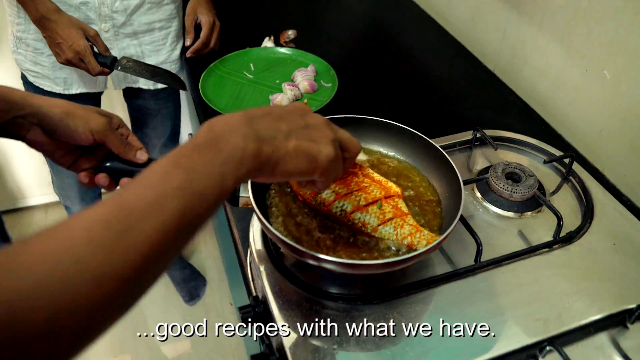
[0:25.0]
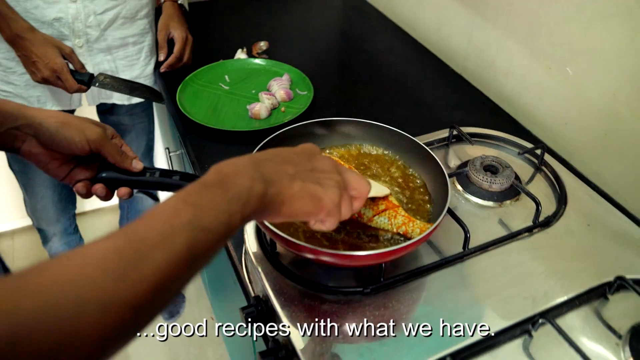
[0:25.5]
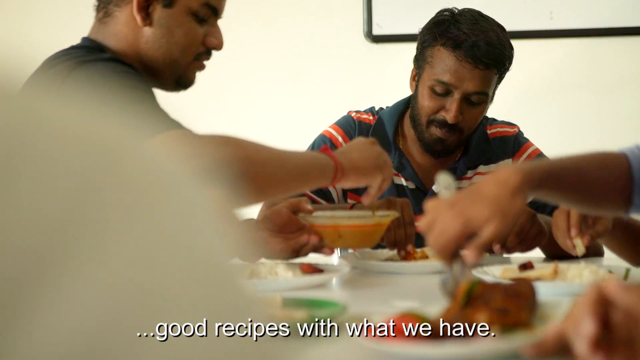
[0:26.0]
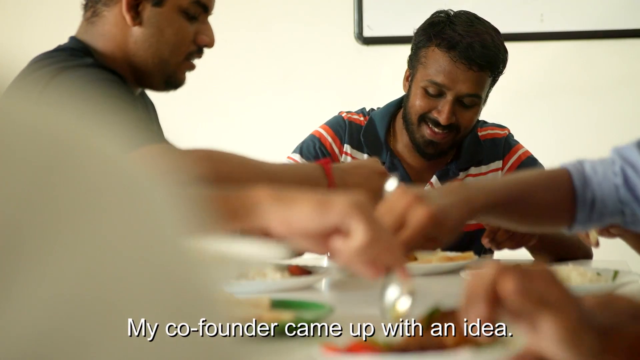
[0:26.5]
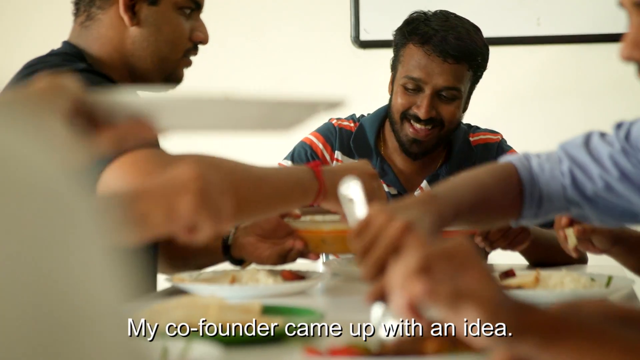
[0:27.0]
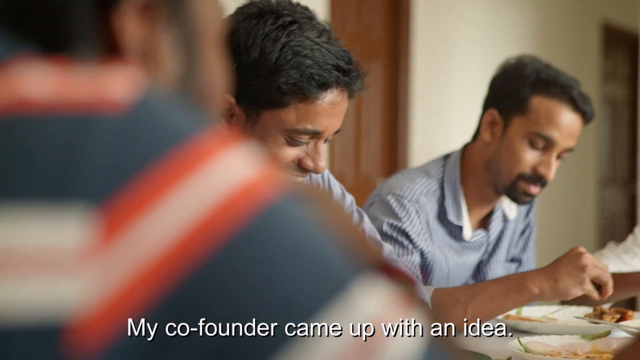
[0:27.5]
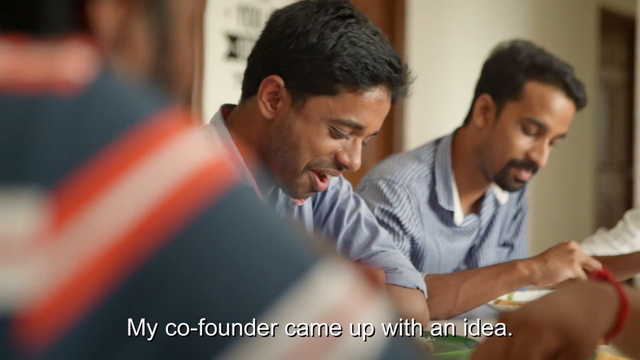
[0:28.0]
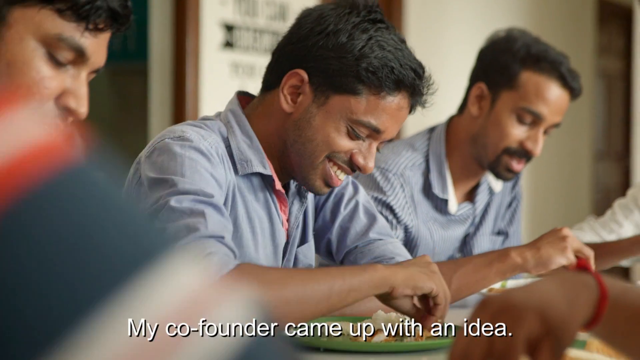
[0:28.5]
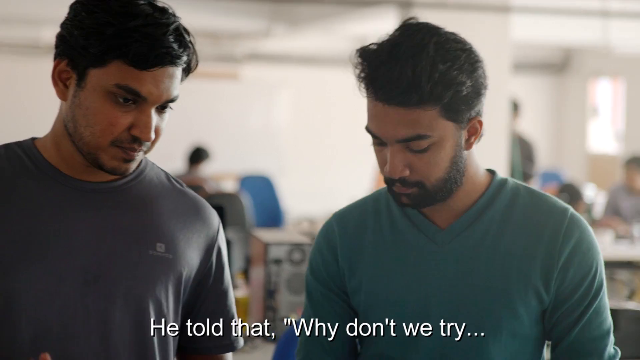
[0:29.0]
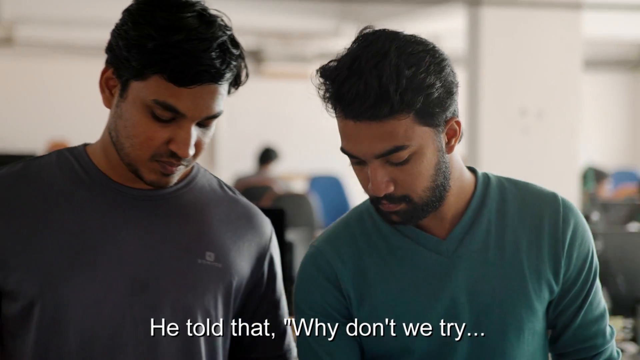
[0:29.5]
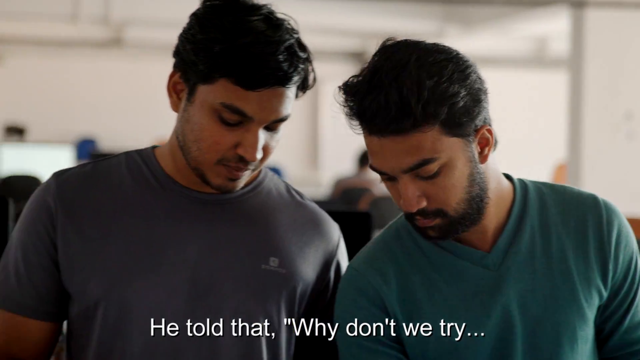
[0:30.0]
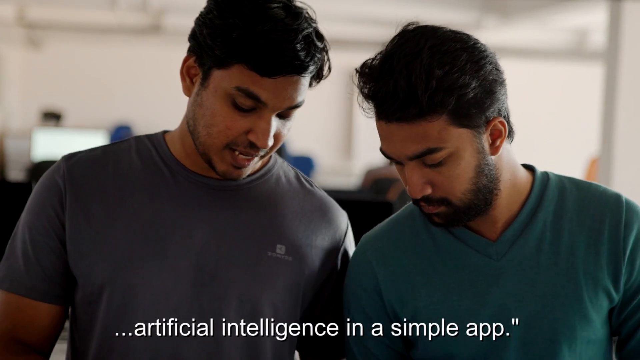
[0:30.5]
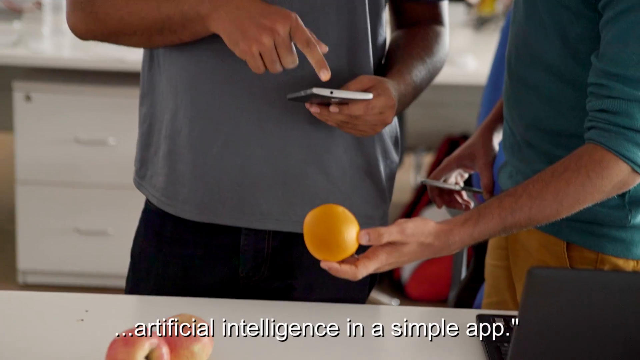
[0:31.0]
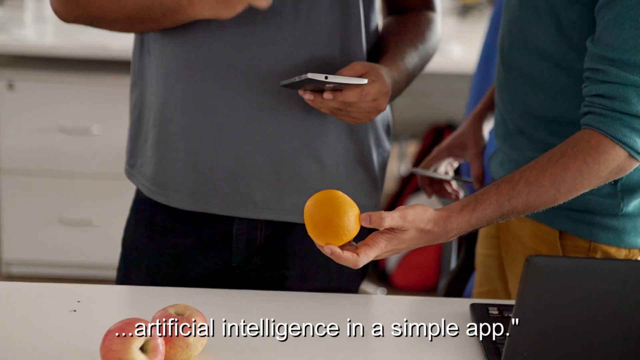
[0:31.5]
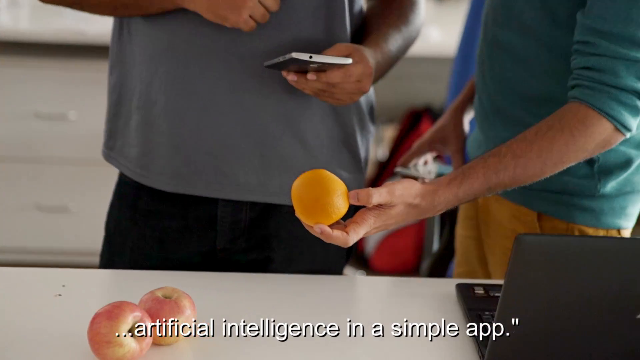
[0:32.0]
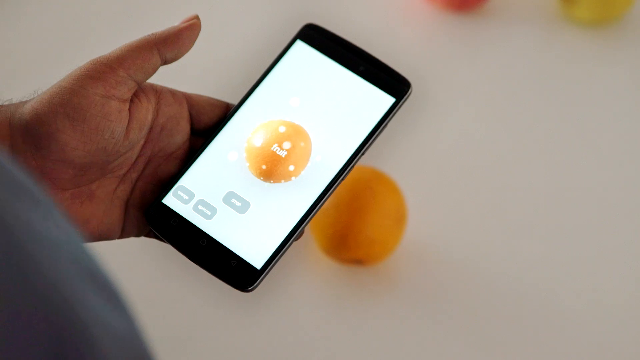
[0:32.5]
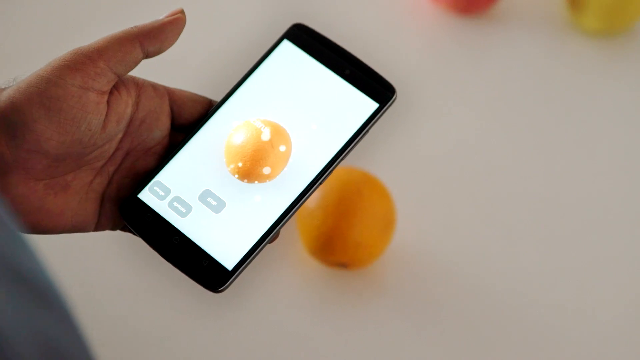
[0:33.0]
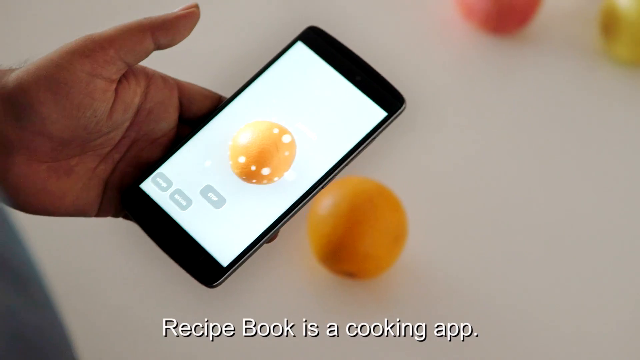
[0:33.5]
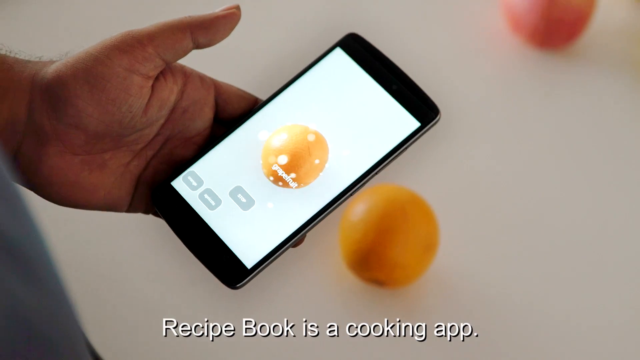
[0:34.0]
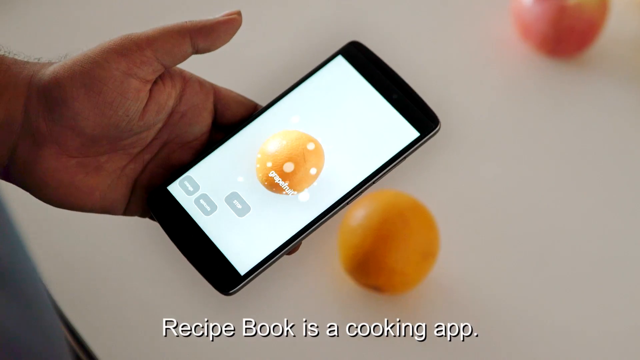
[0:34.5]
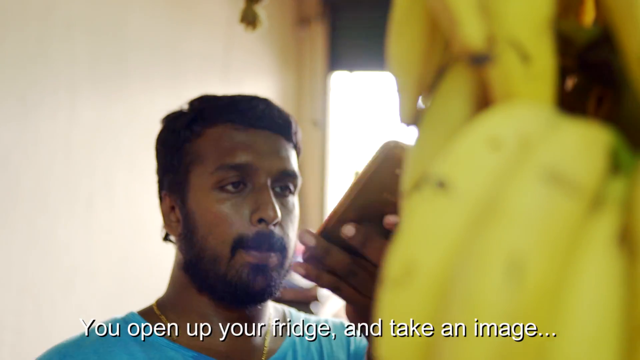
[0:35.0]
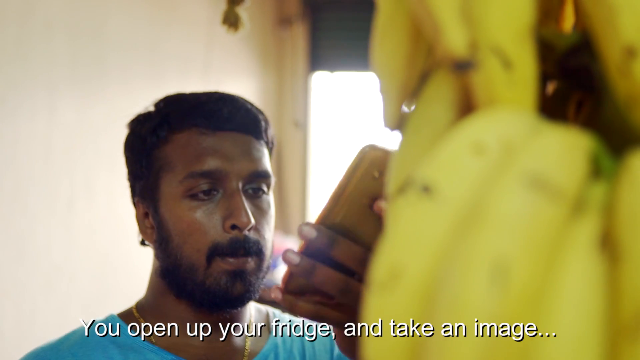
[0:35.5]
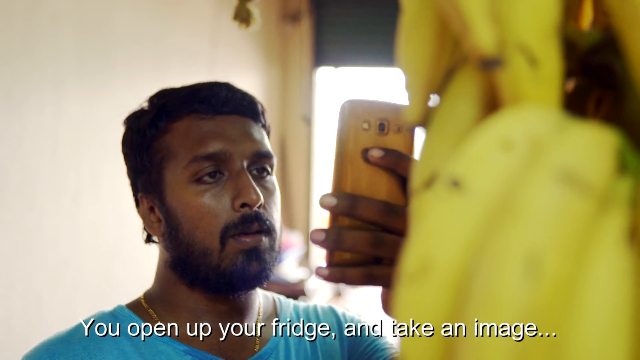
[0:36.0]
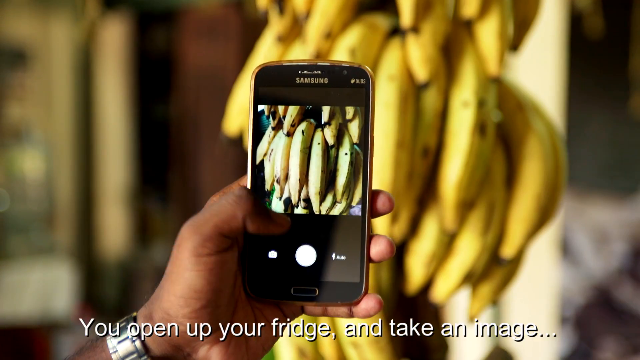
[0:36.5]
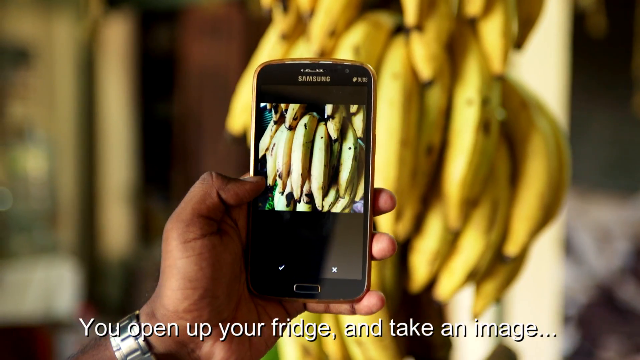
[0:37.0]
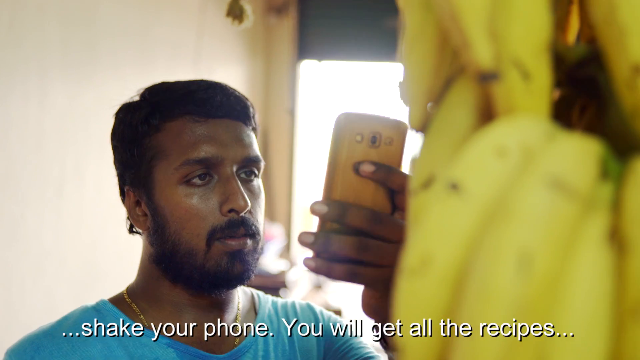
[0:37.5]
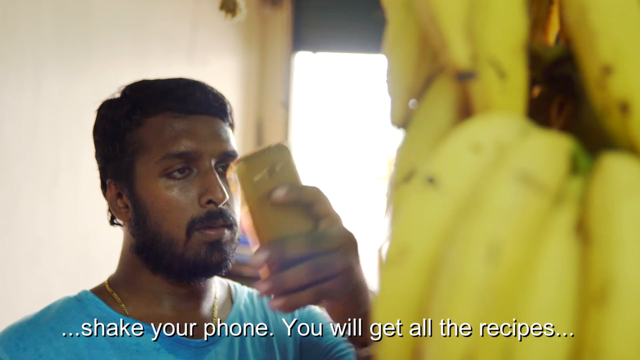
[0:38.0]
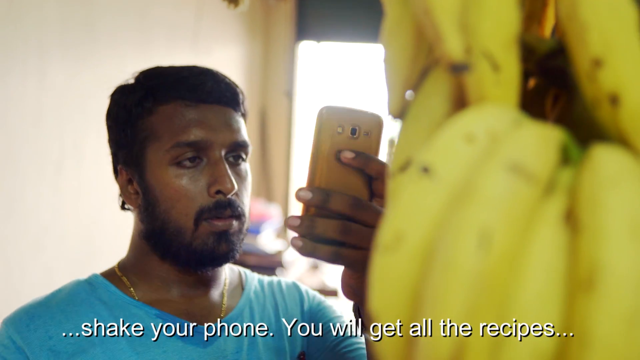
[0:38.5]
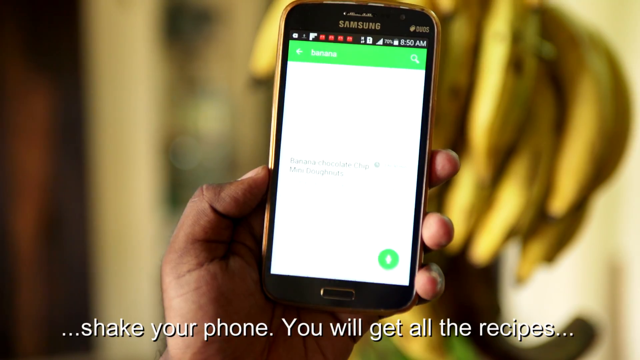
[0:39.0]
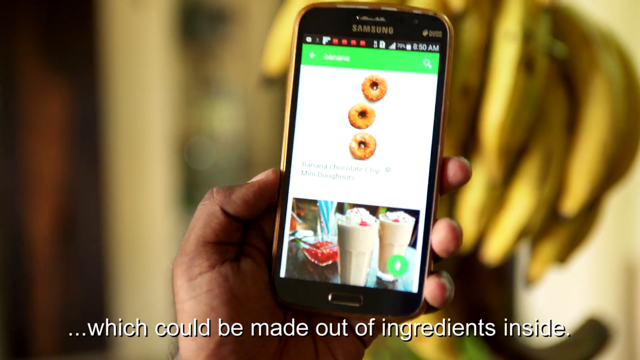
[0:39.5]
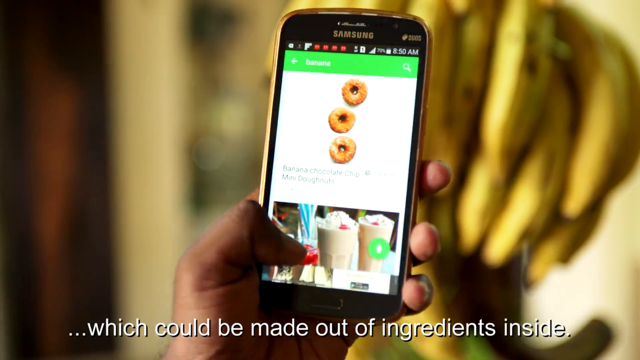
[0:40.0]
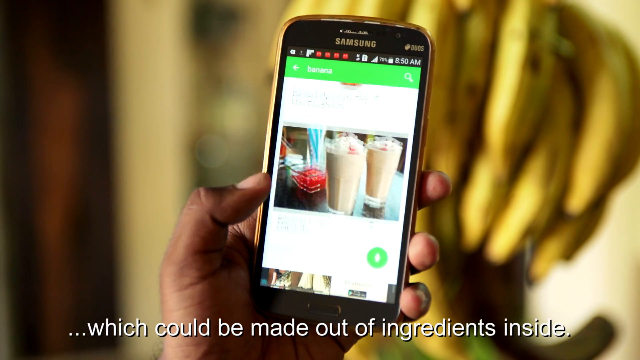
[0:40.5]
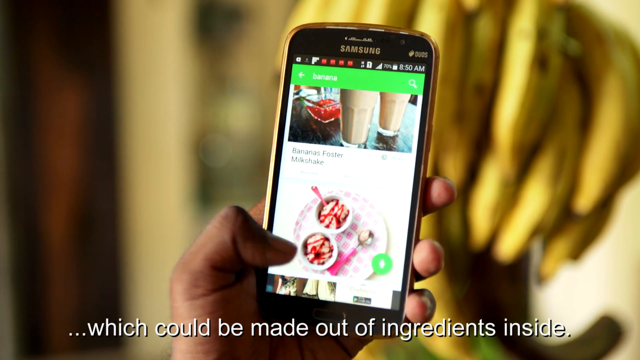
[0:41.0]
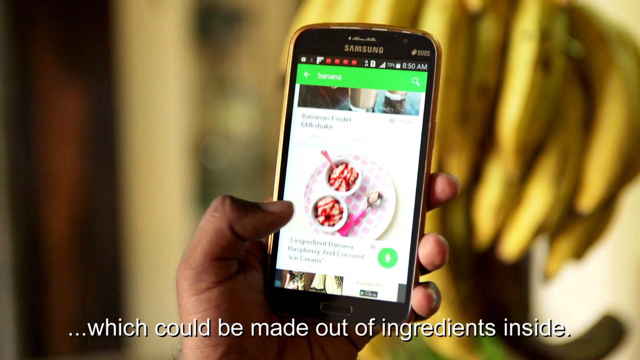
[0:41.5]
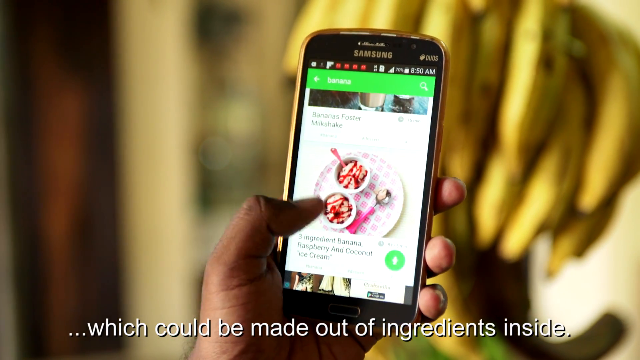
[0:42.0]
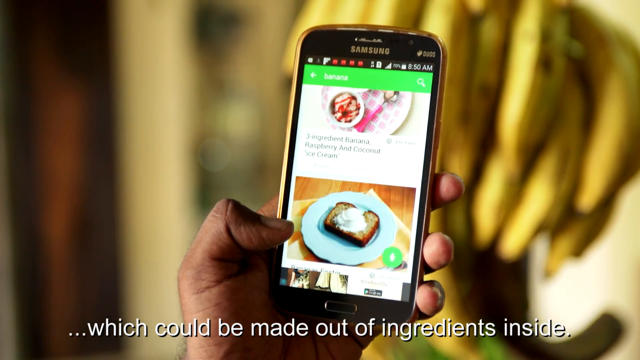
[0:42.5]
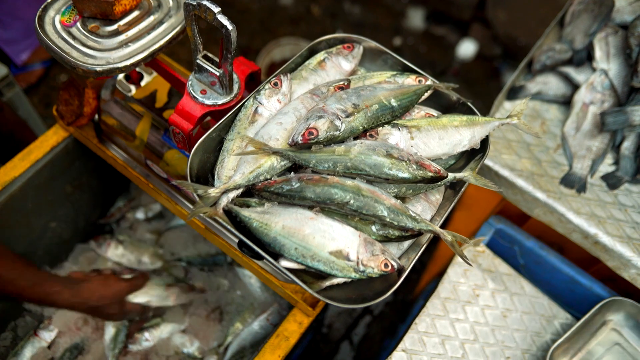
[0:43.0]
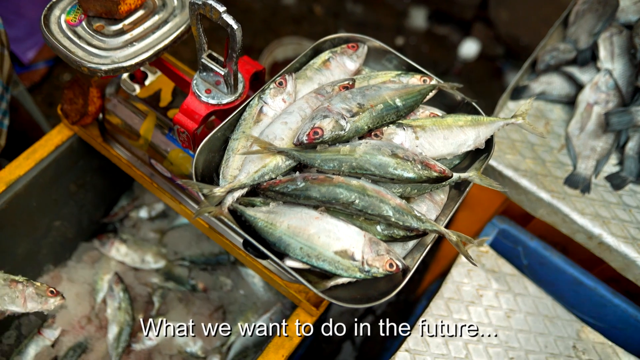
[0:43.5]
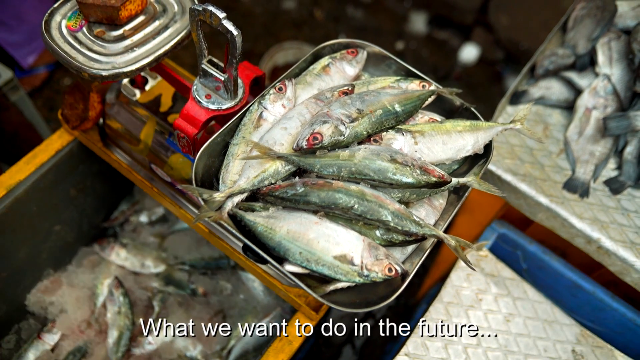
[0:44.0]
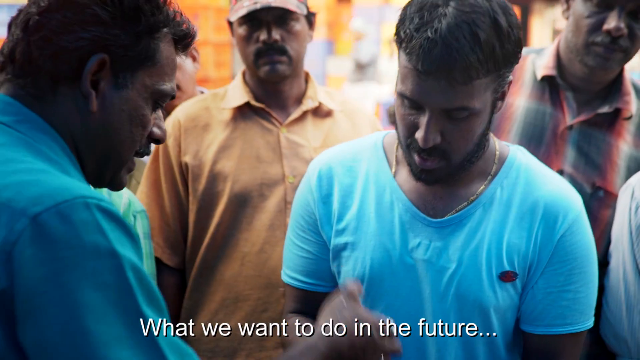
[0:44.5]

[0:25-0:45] The men are still cooking and frying the fish. Text below the action reads "my co-founder came up with an idea he told that why don't we use artificial intelligence in a simple app recipe book is that app you open it up and you're at your fridge and you take a picture image on your phone shake your phone you'll get all the recipes you could that could be made out of the ingredients inside." While the text is displayed, the video shows what they are doing, such as shaking the phone, illustrating how the app works.